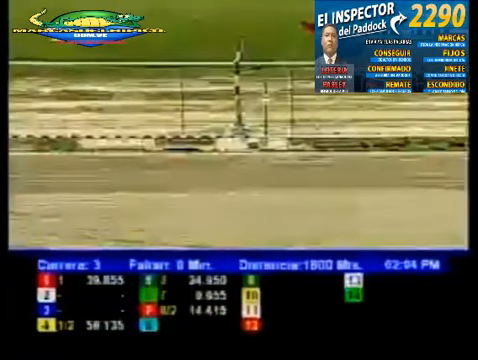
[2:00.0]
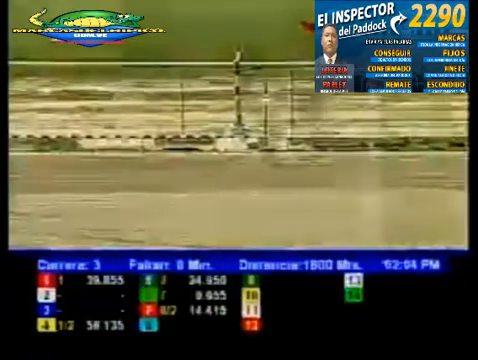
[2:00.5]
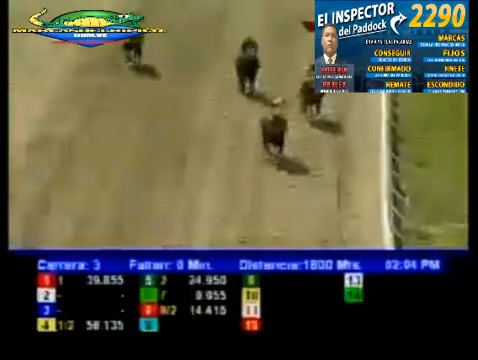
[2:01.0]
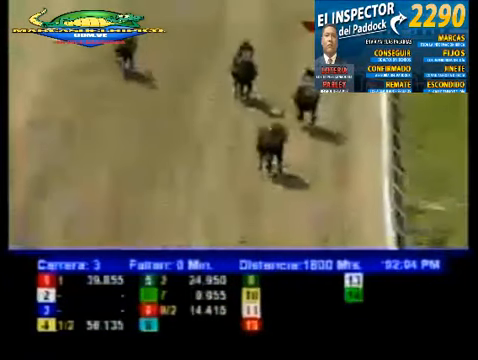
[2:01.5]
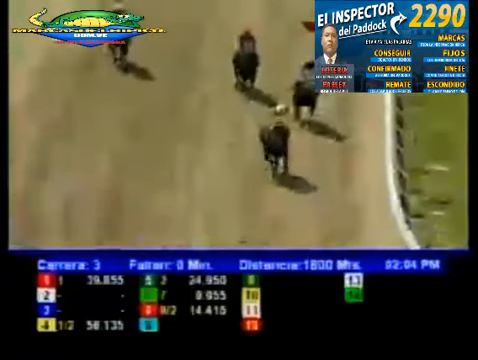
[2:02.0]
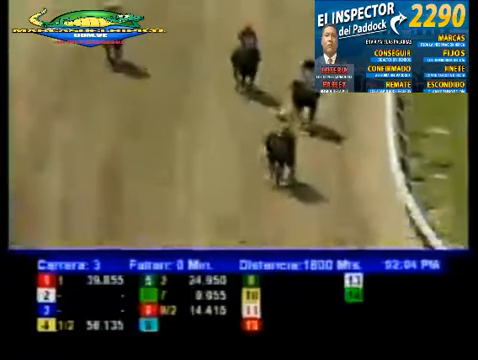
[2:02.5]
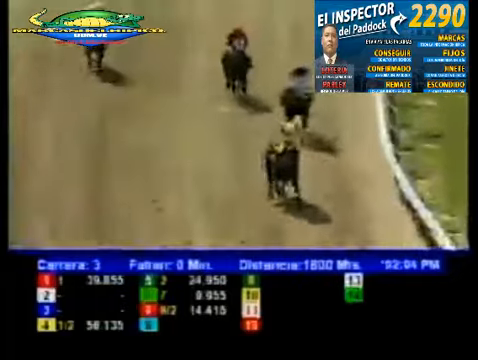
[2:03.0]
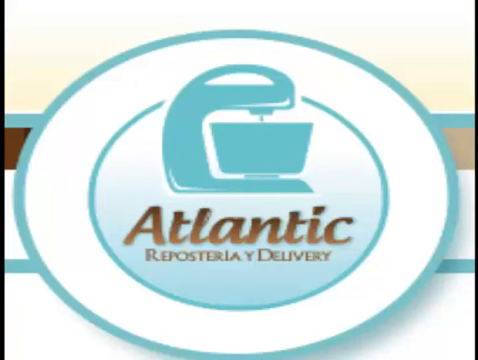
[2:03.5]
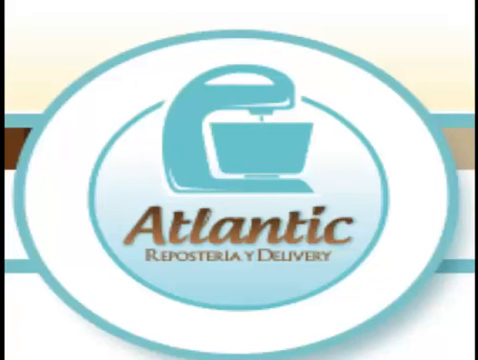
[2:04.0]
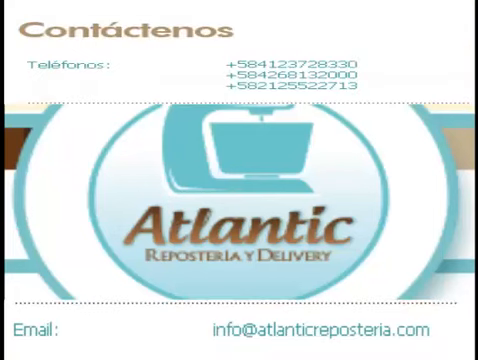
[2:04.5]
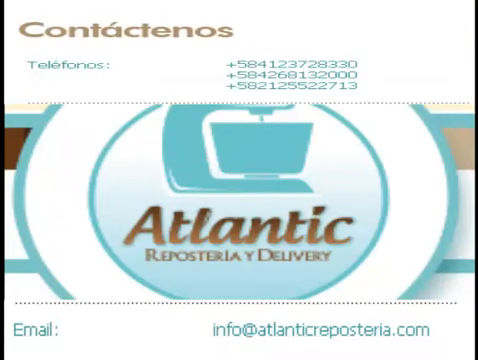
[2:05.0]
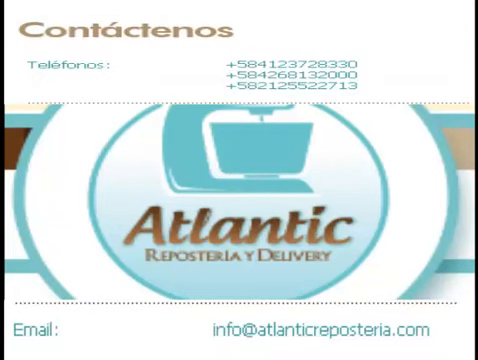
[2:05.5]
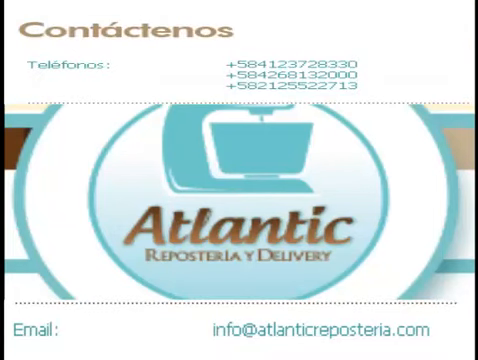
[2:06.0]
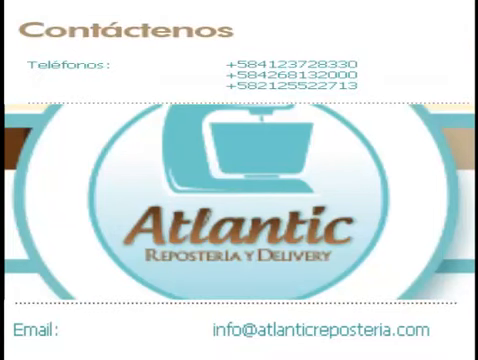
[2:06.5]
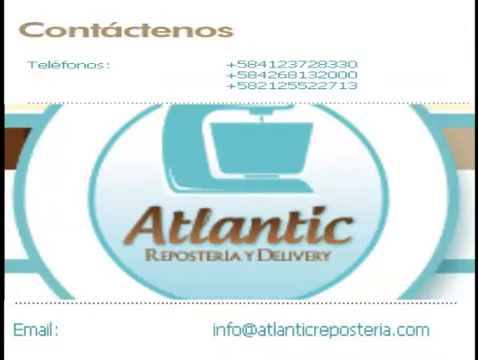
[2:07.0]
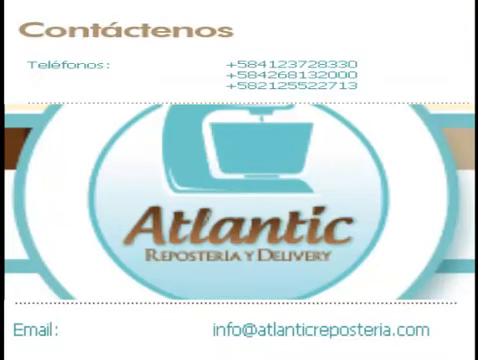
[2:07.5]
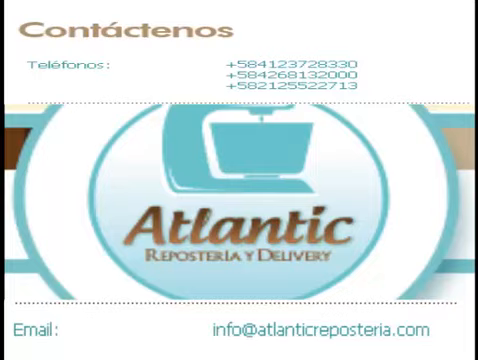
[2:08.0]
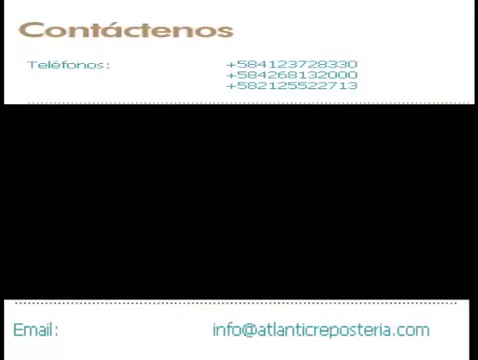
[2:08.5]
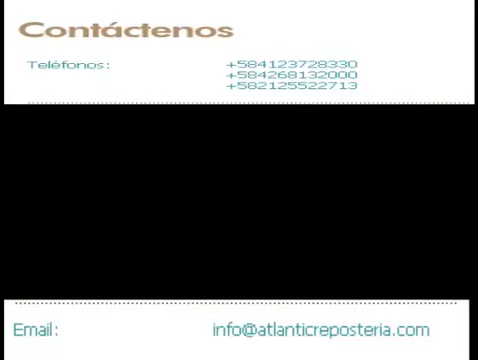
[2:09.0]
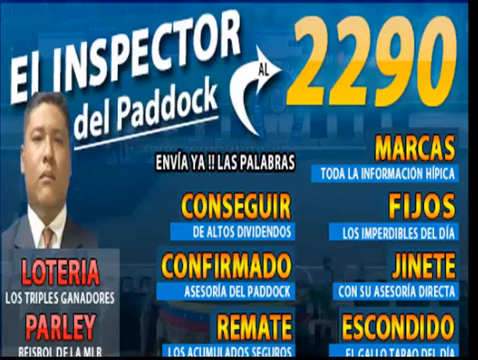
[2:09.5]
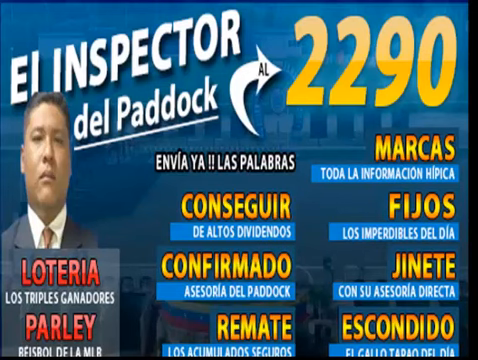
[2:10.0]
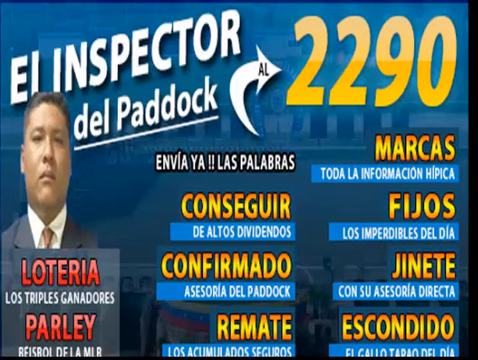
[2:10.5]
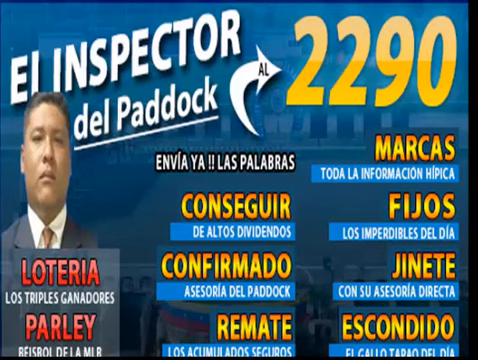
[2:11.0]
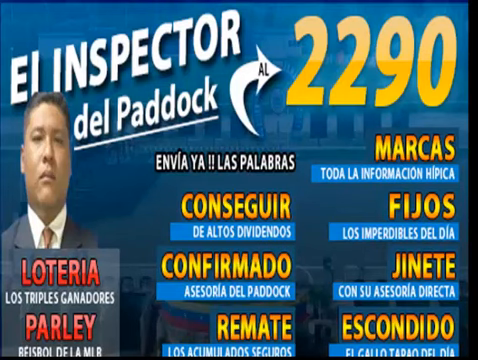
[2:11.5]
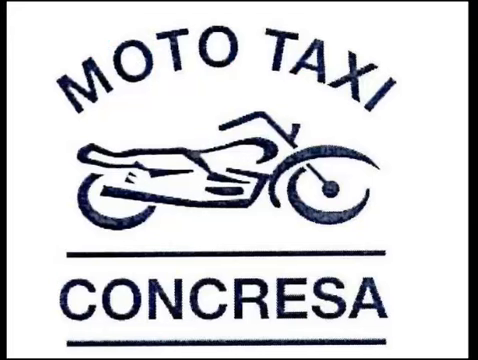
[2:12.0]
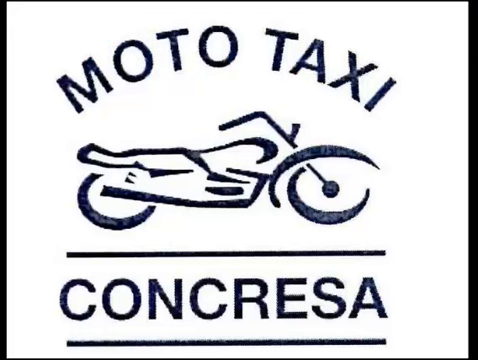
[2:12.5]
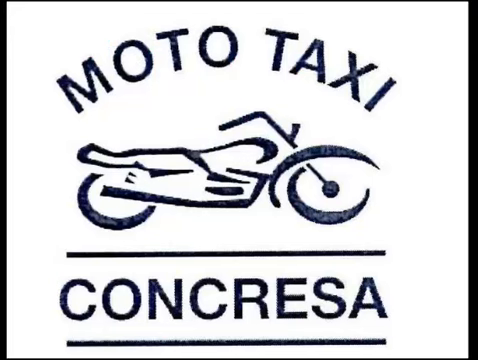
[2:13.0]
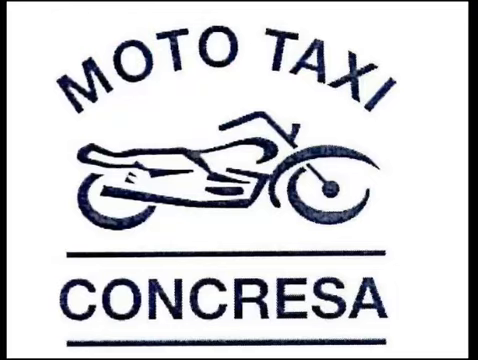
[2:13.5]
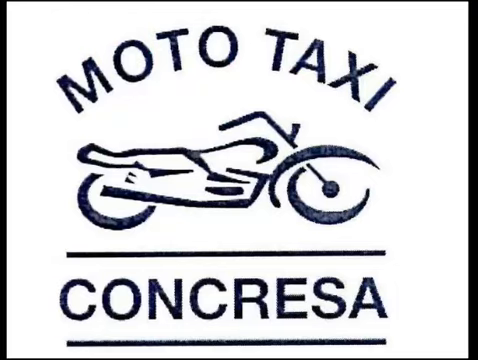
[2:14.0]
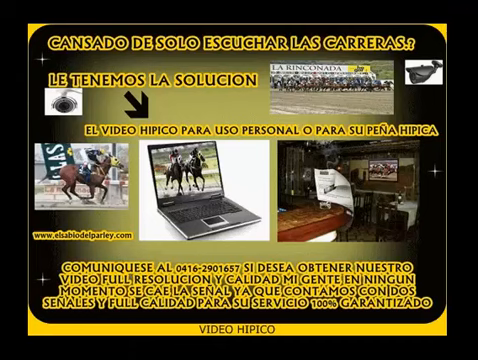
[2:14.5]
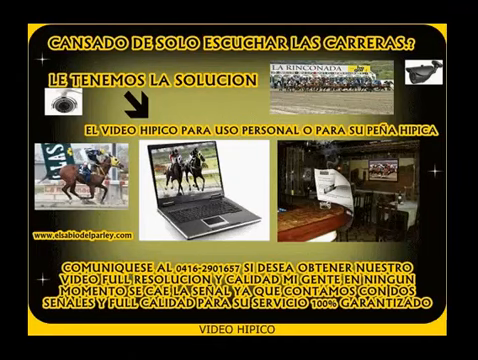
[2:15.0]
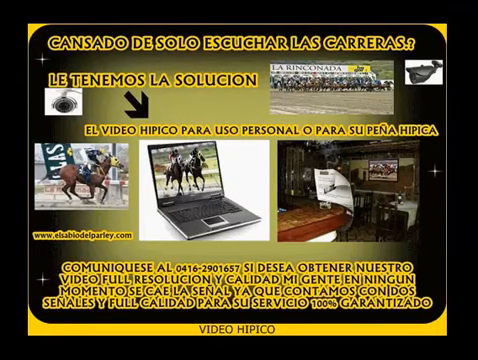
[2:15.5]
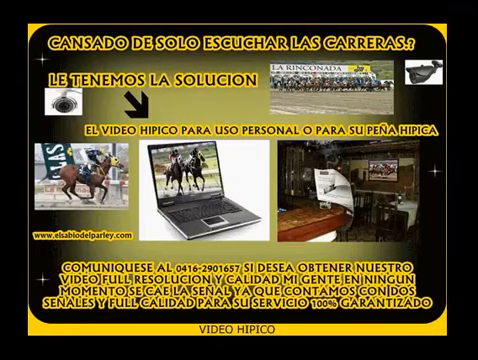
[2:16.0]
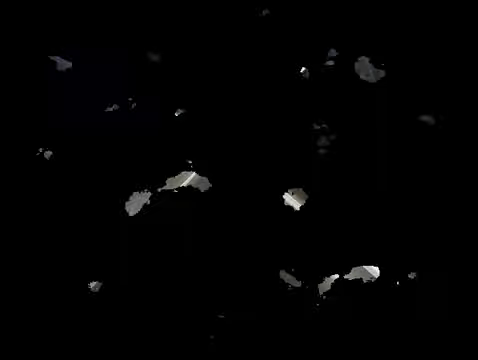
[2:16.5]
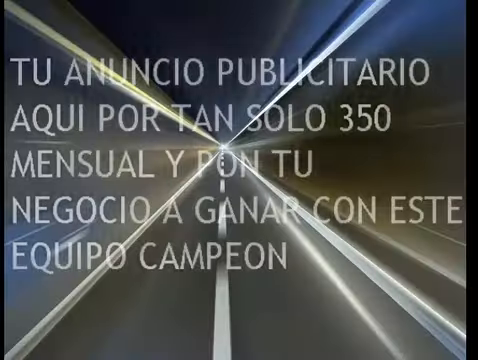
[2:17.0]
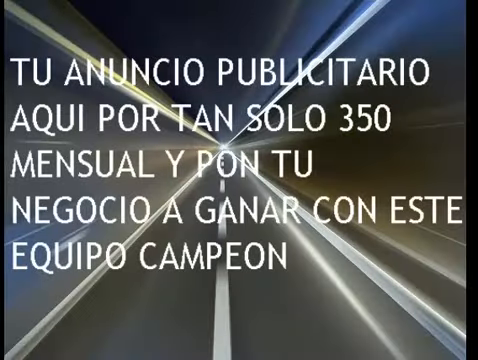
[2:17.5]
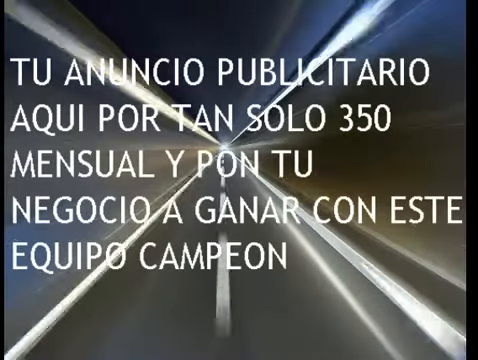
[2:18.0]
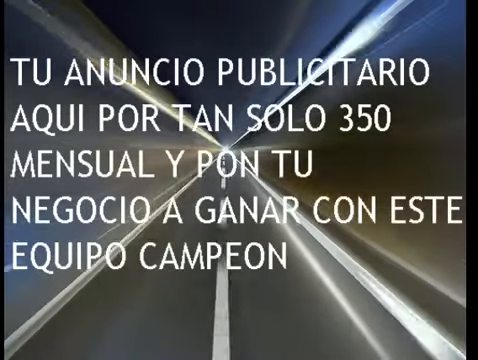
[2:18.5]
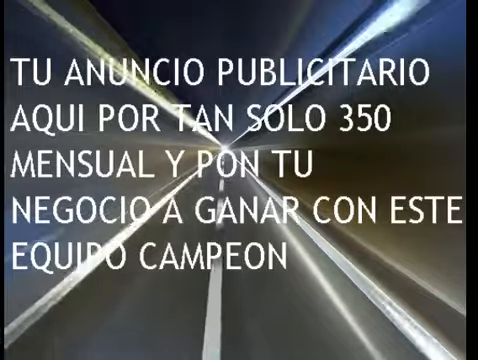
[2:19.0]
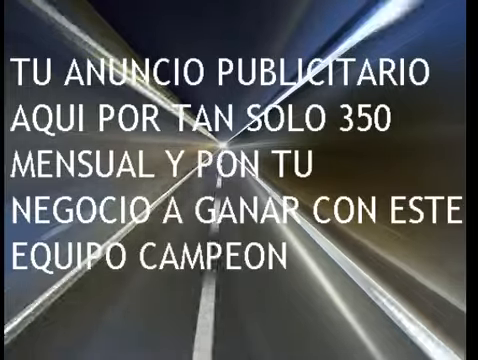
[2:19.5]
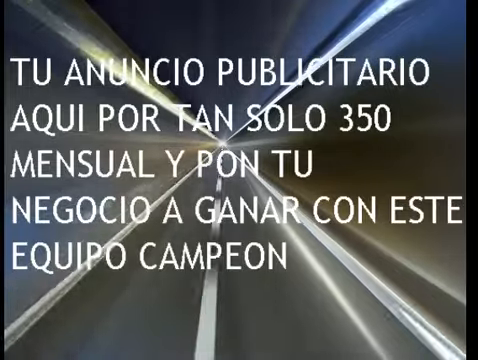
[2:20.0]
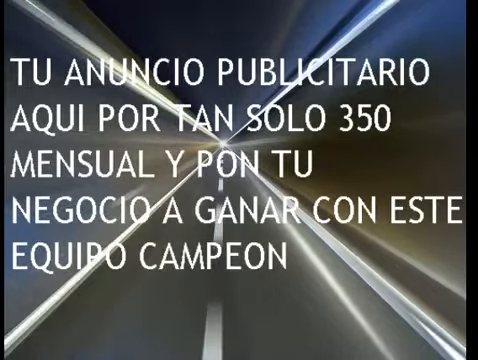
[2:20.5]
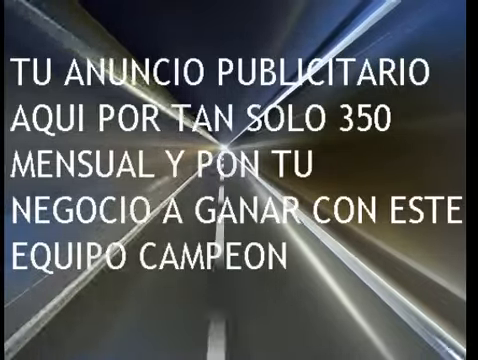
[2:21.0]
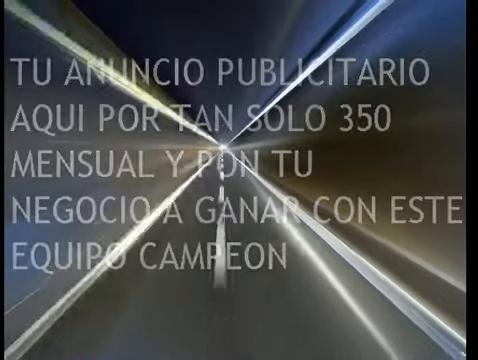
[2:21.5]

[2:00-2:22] The bottom of the screen shows what appears to be some data with numbers, and above it what looks like a front-facing angle of a couple of the horses racing briefly. The screen then changes to what looks like a closing screen, with contact information written in Spanish at the top, three phone numbers below, a blue ring that says "Atlantic" with some Spanish below it, and an email address in blue text at the bottom of the screen. Another closing video follows: it is blue, with a picture of a man on the left-hand side and Spanish text in white, yellow and red. A further closing screen has white Spanish text over a kind of futuristic-looking brown and gray background, with a white beam that splits into four sections reaching all four corners of the screen. Inside is a tunnel with dotted lines forming a road, moving very fast.